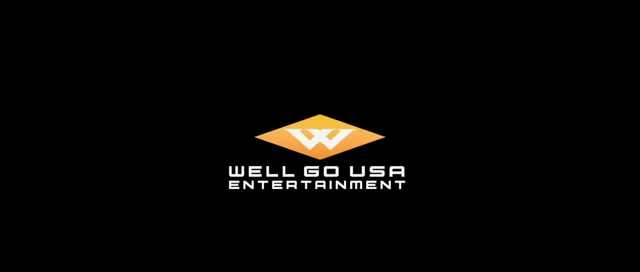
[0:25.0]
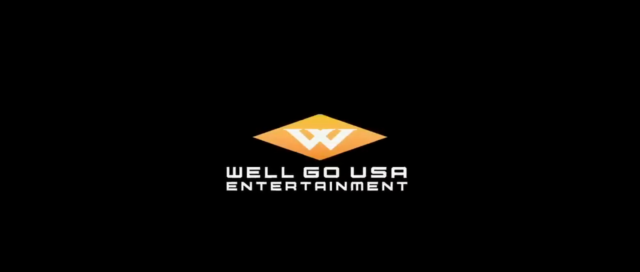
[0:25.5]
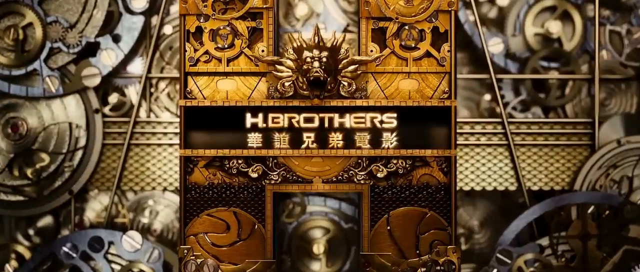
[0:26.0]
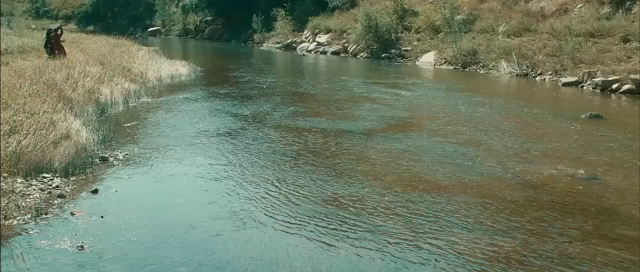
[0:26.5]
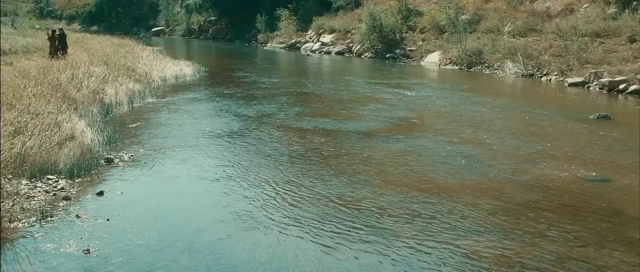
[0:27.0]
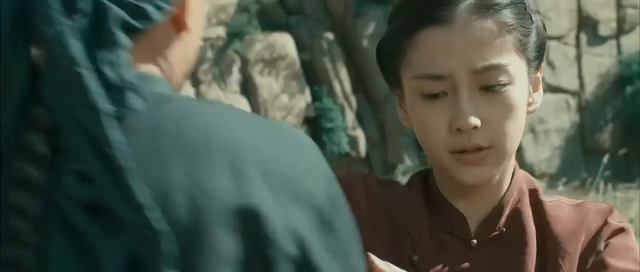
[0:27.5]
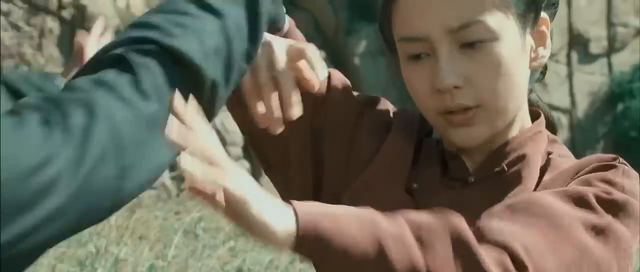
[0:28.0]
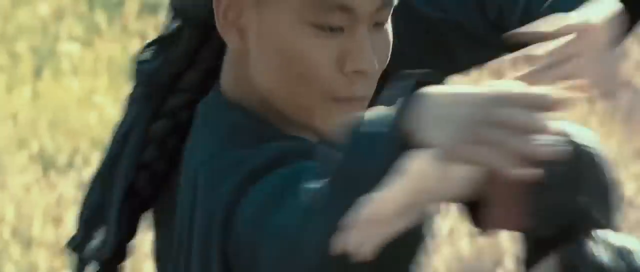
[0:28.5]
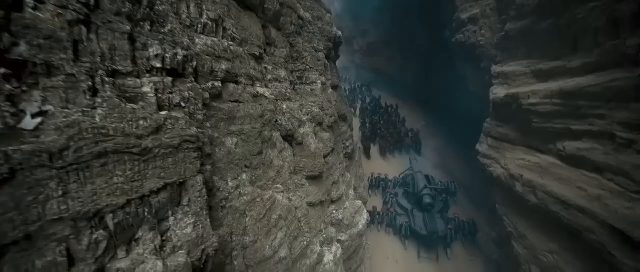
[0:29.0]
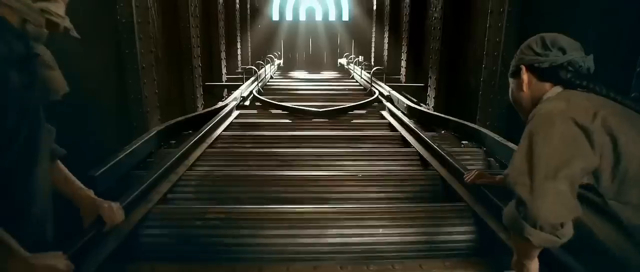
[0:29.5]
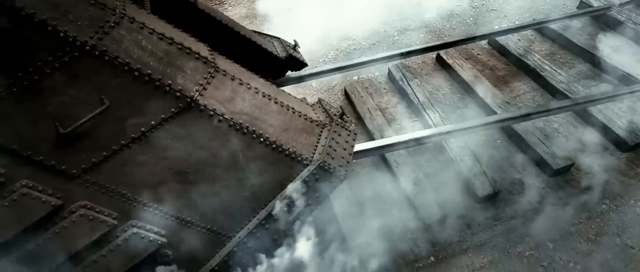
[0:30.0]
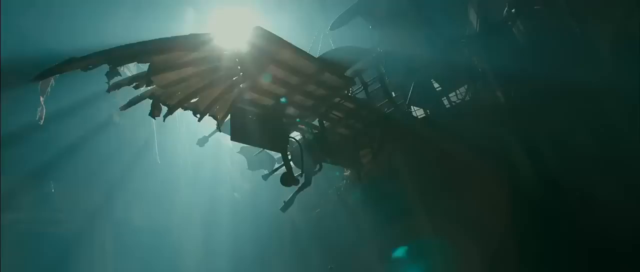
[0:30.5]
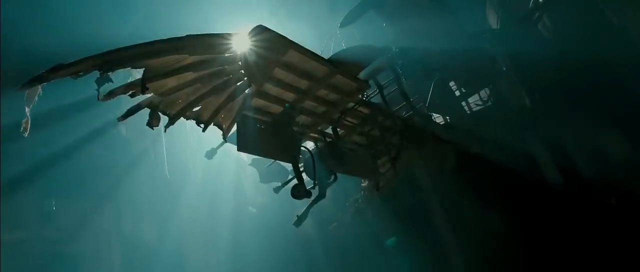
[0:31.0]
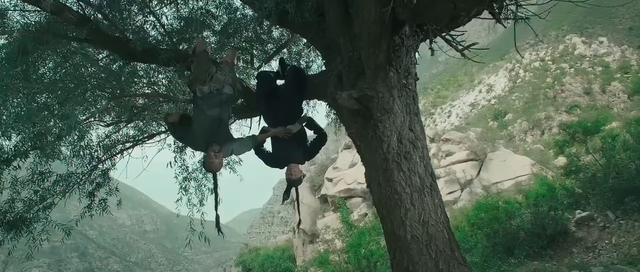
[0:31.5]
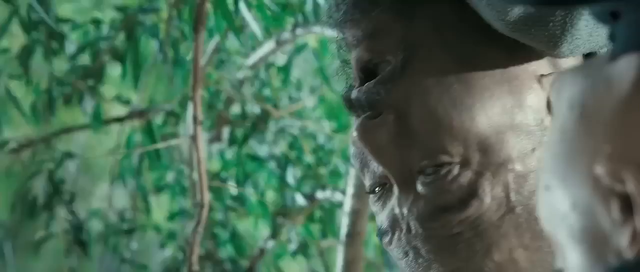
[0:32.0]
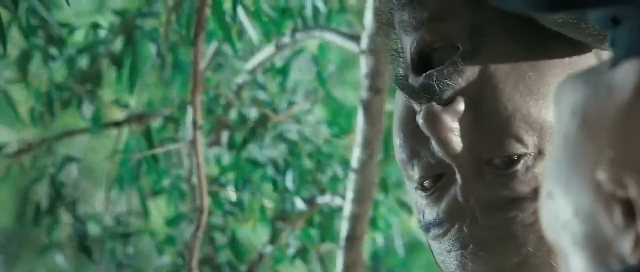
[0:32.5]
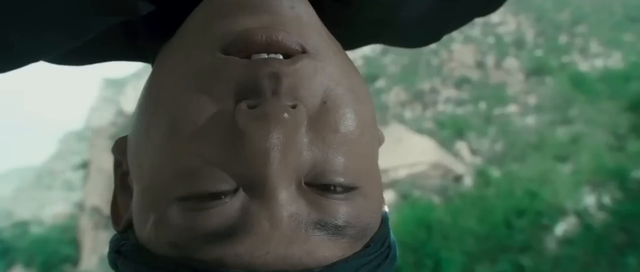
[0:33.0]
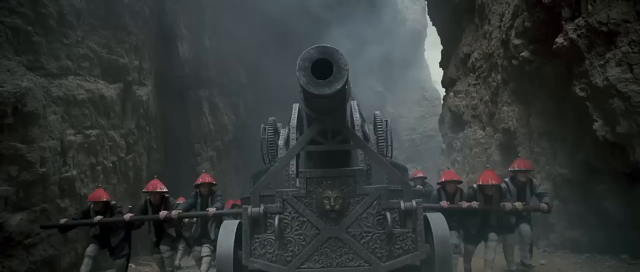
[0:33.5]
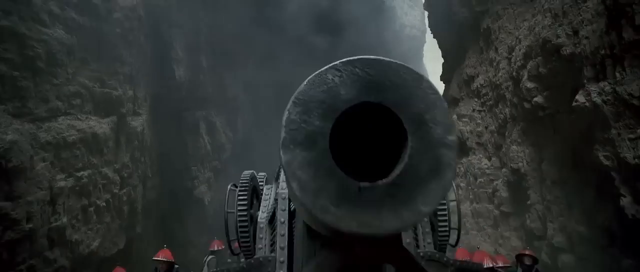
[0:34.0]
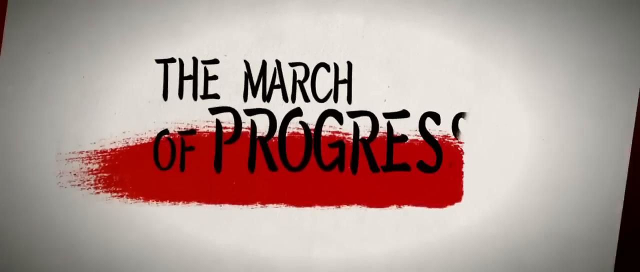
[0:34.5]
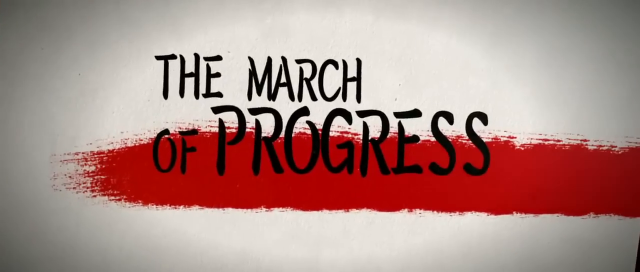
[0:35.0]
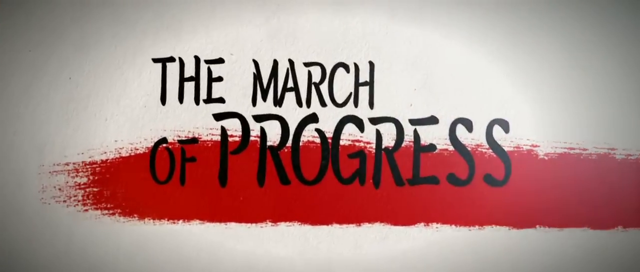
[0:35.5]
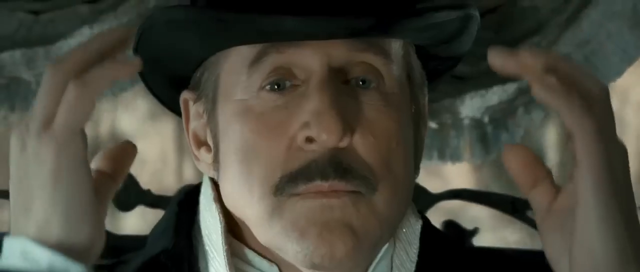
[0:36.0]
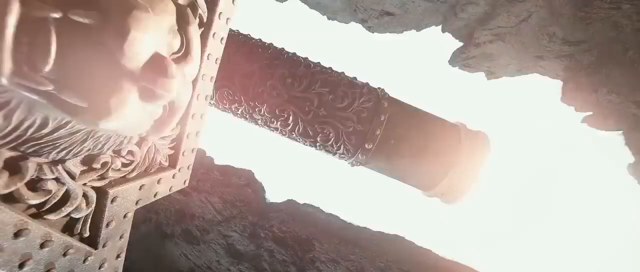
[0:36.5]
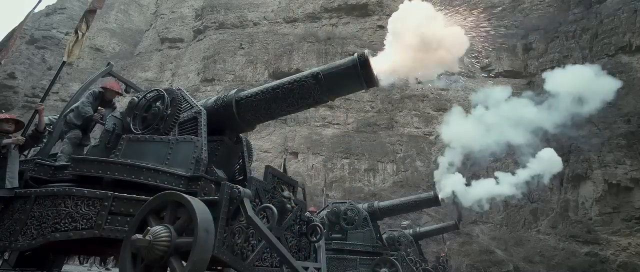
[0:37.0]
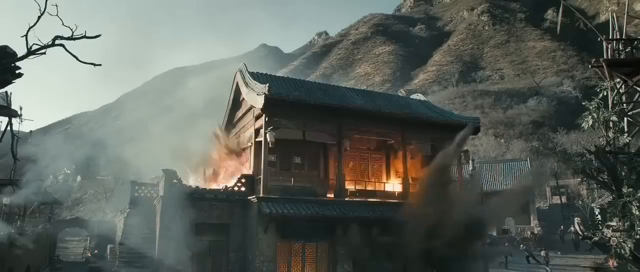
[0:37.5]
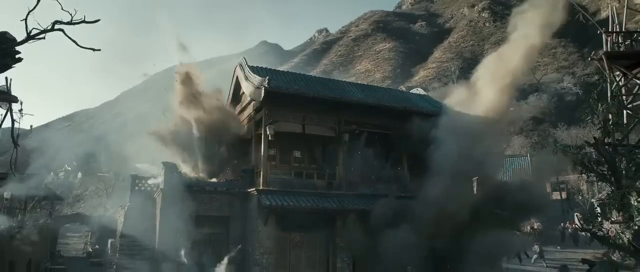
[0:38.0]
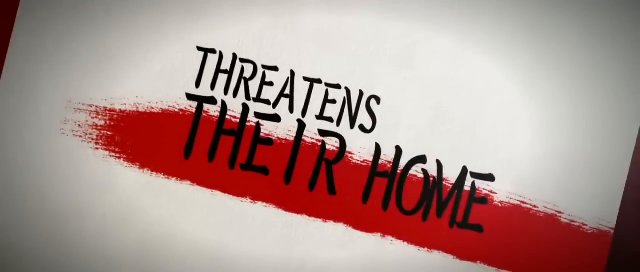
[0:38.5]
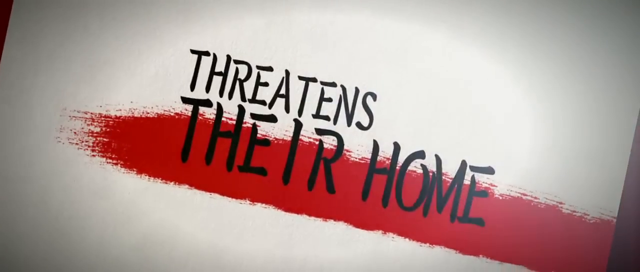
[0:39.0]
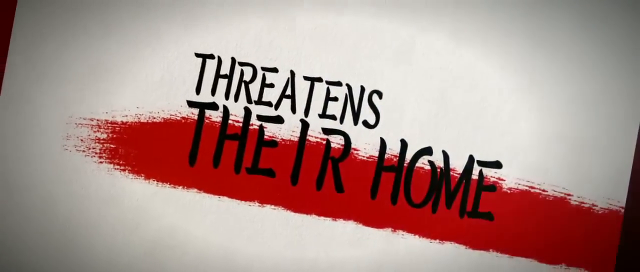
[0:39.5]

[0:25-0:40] Two people train near water, possibly a river, and are shown hanging upside down on a tree branch while training. A non-Asian enemy is introduced using modern technology, such as very large cannons, to destroy parts of the city, and houses are blown up entirely by the cannons. A man with a black hat and a mustache, who looks very confident, rides in some kind of vehicle heading toward the Asian city whose people are being attacked. The video indicates that the march of progress threatens their home.